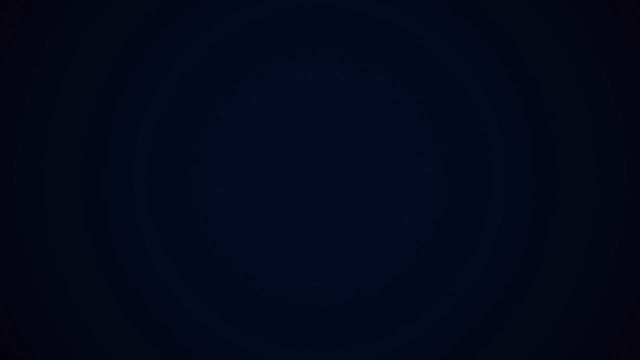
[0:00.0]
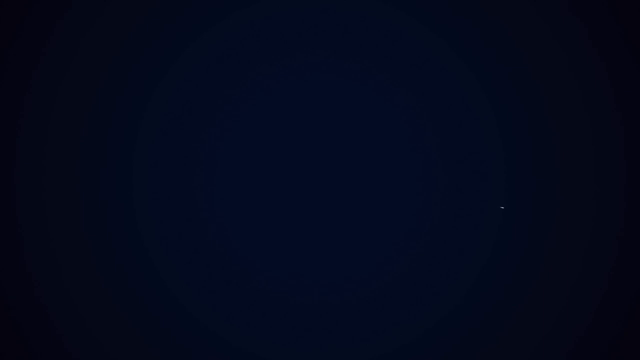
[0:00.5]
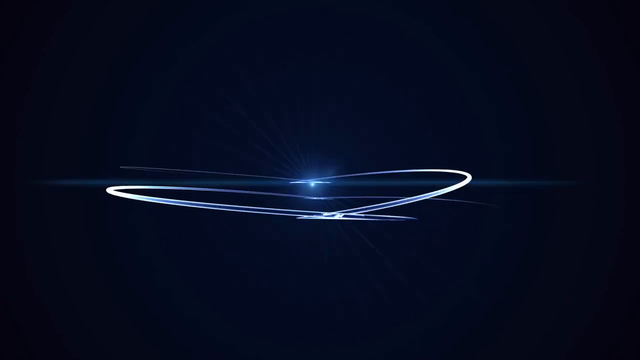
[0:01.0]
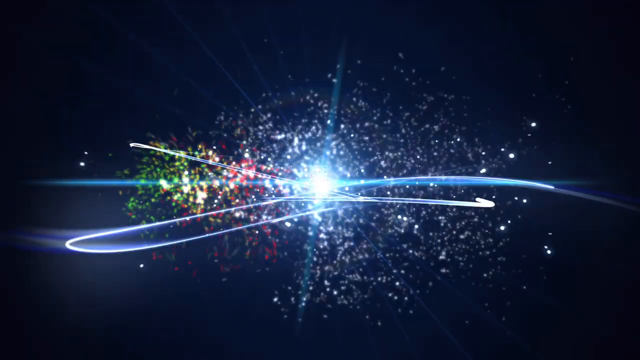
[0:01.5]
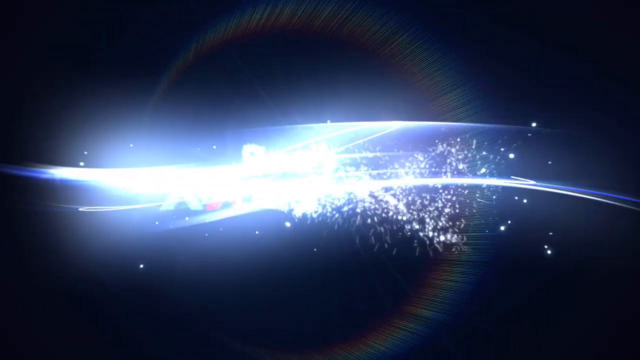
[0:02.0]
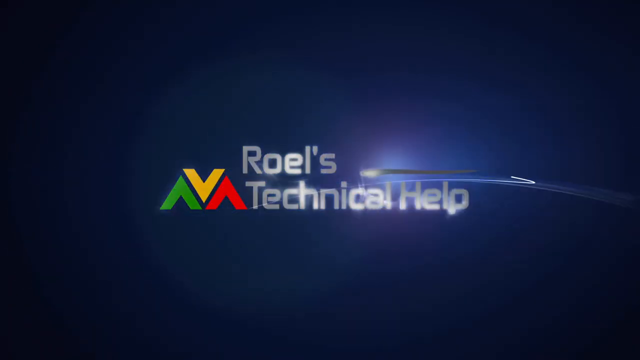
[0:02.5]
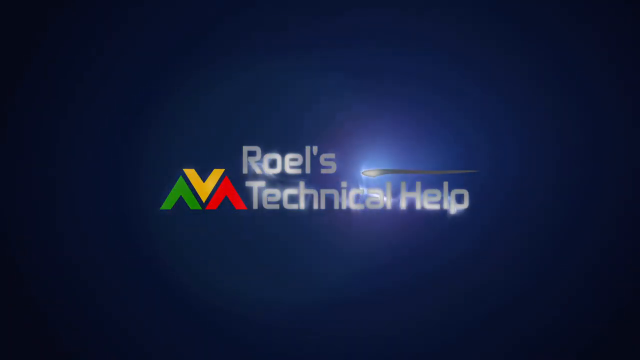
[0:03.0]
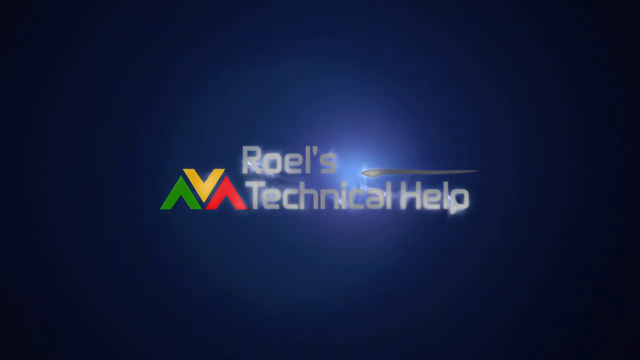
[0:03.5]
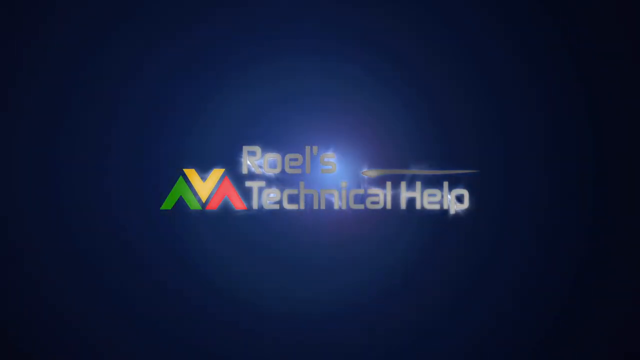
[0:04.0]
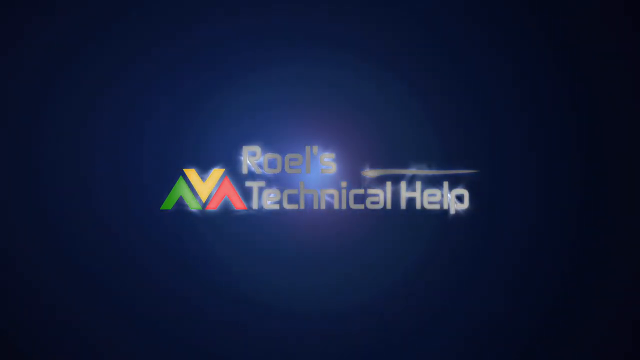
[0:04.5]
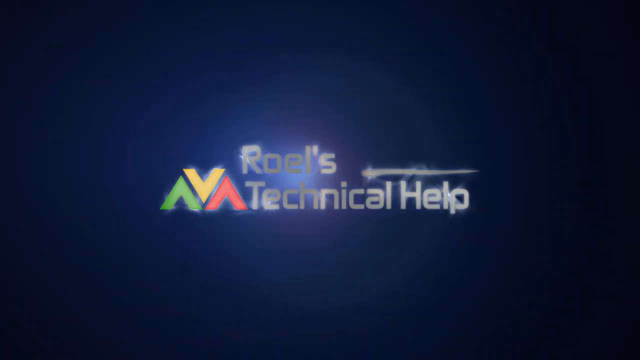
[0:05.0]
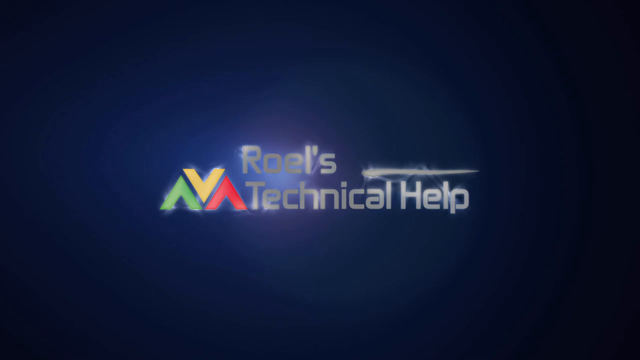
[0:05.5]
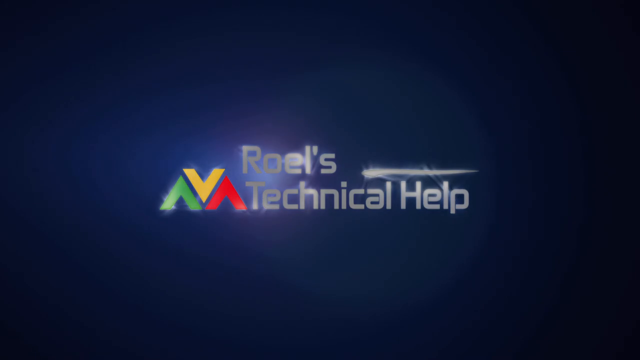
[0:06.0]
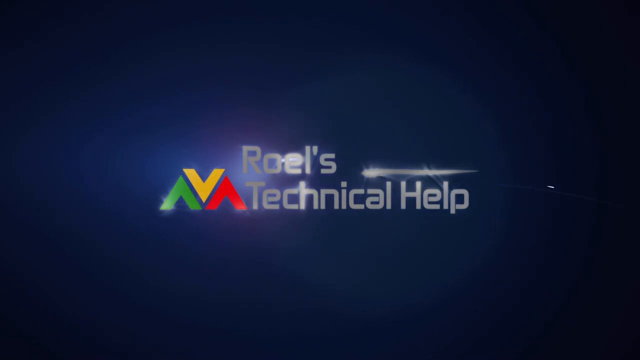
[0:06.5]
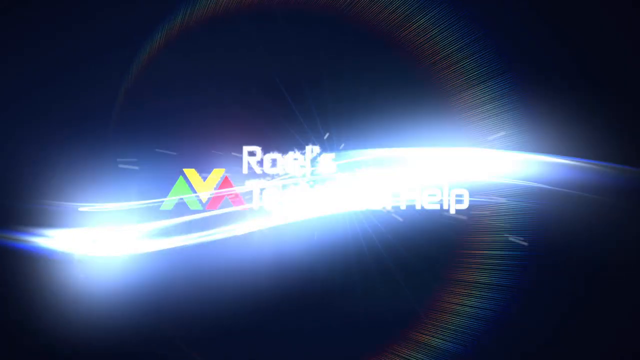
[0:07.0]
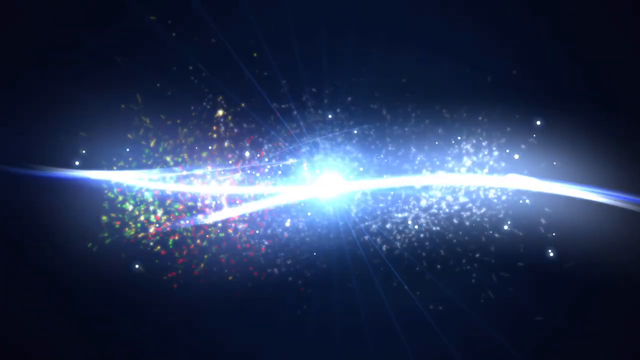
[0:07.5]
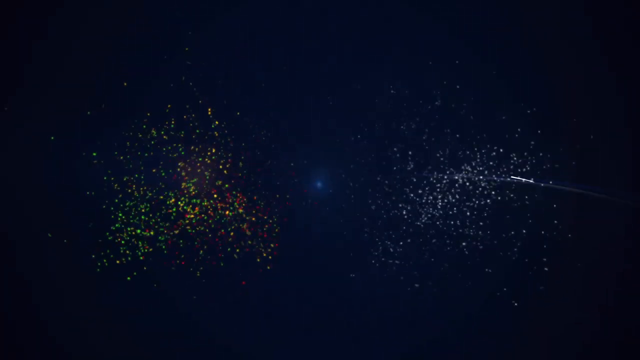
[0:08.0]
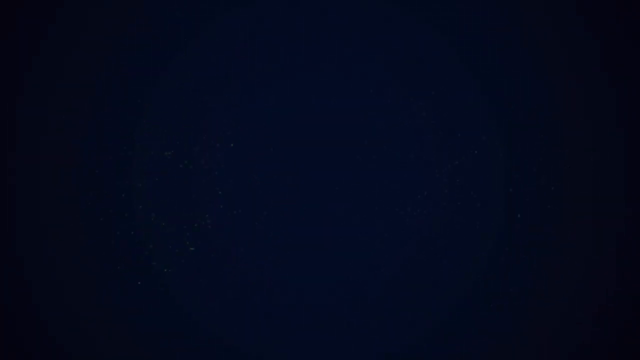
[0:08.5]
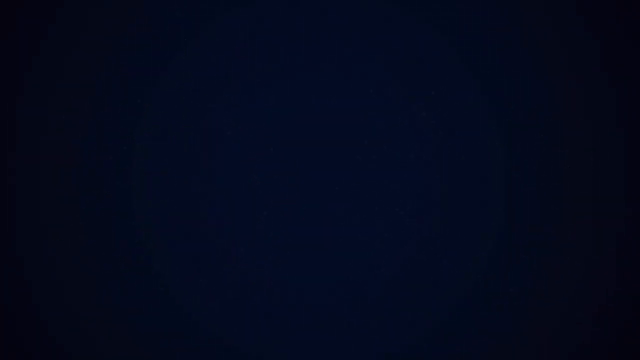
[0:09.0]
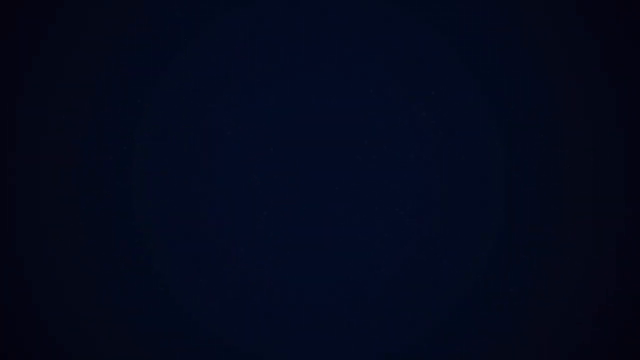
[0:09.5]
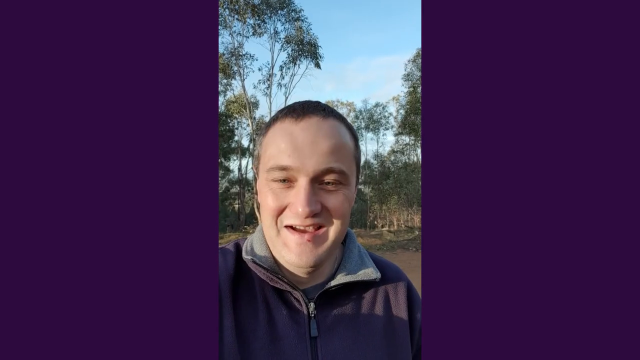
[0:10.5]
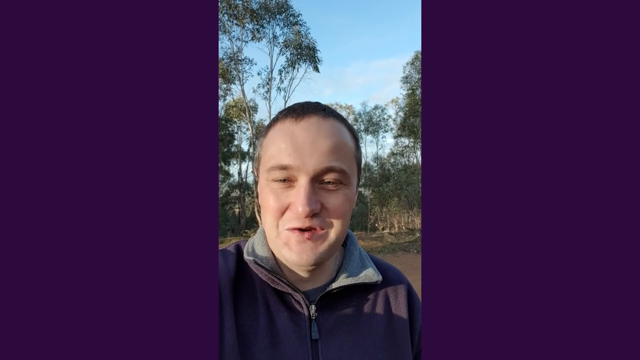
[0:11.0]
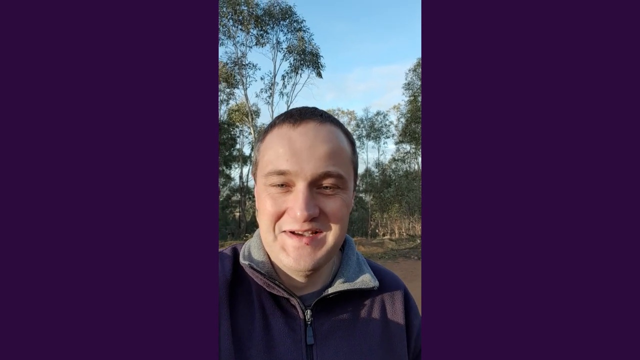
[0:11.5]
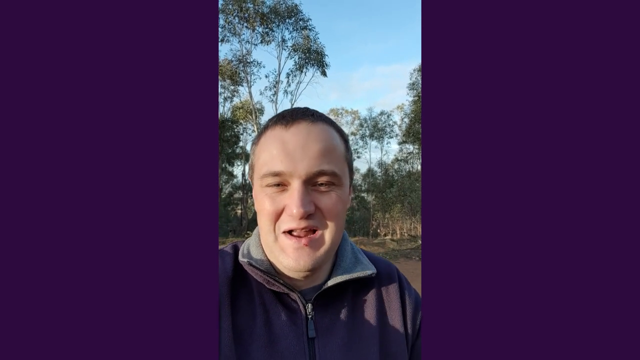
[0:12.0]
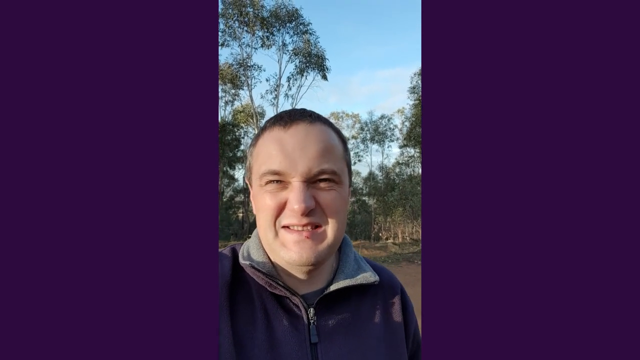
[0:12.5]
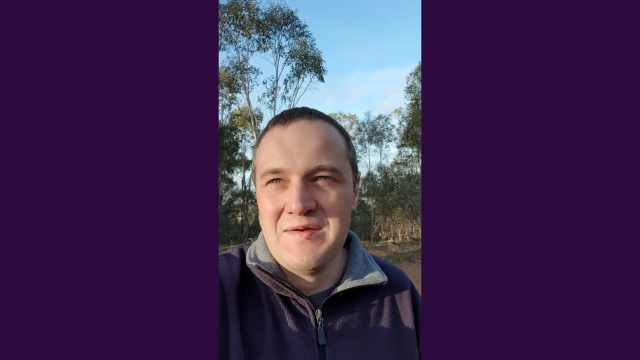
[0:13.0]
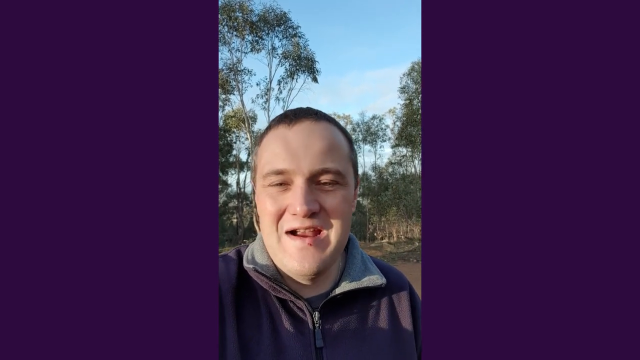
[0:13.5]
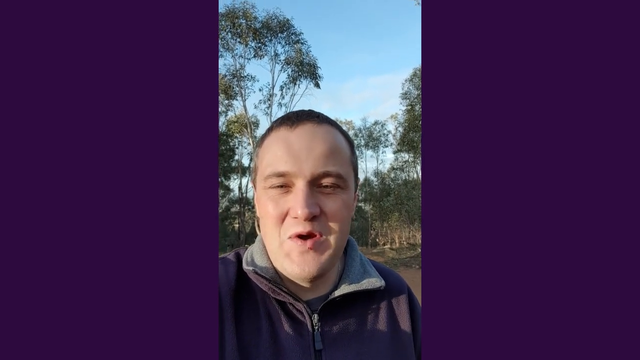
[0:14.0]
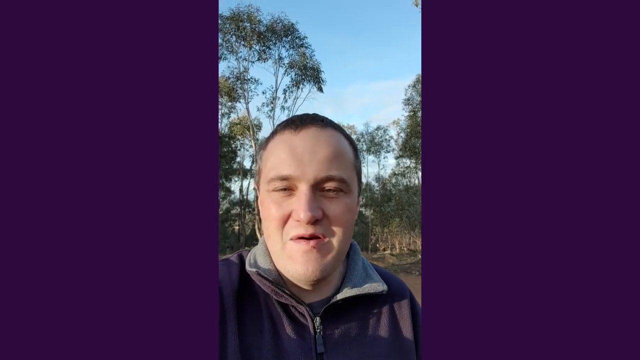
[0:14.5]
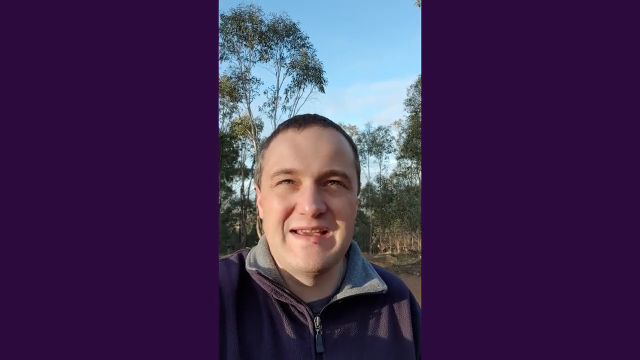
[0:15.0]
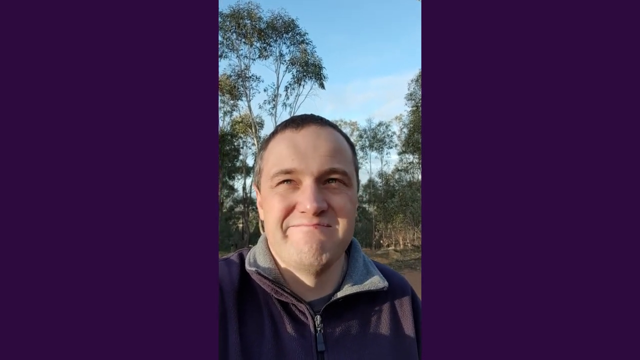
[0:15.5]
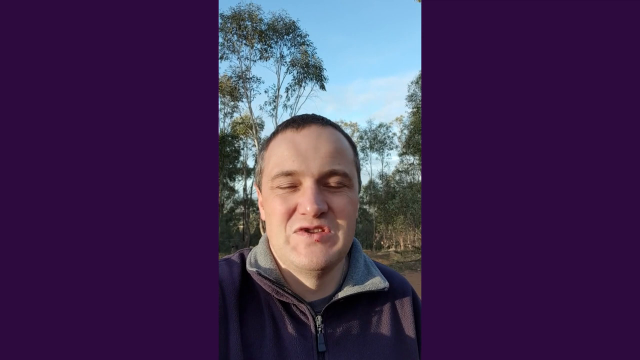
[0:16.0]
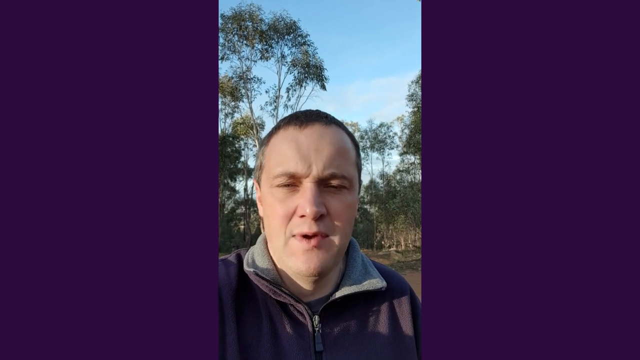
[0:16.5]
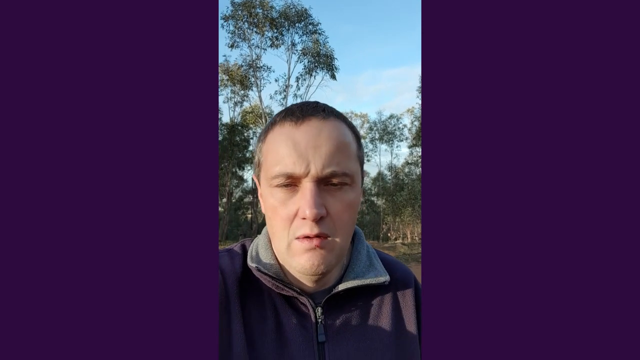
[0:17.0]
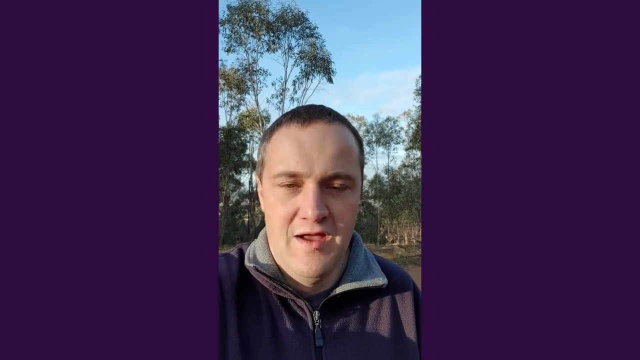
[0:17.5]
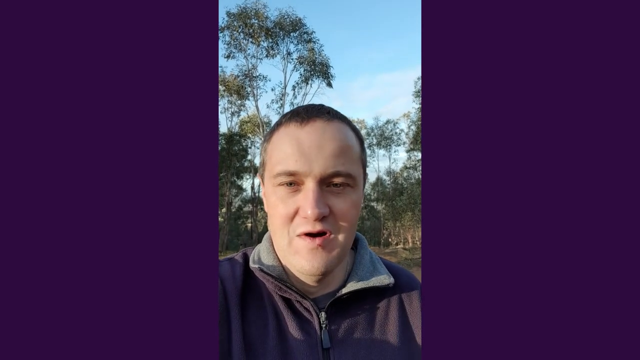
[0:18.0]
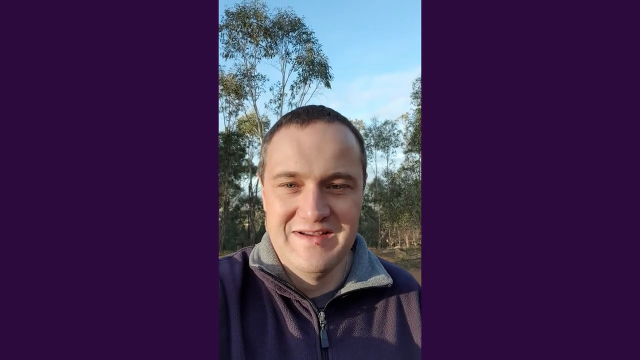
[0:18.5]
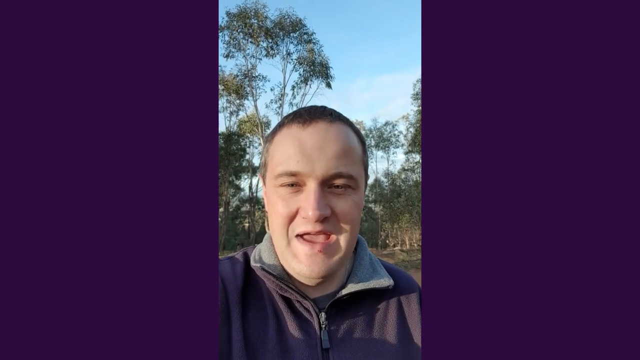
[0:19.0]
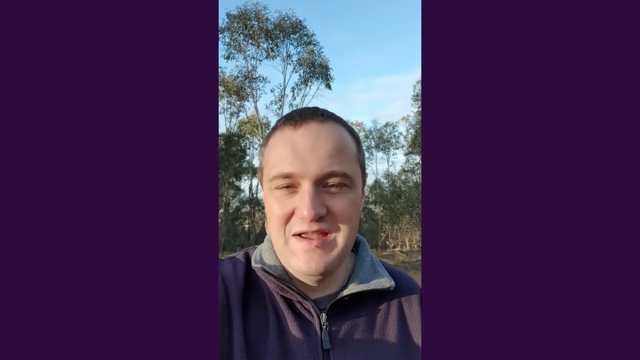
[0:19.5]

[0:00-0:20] The video opens with the company name "Roel's Technical Help" on a dark blue background. To the left of the name is a logo made of red, yellow and green V shapes: an upside-down green V in the middle, an upright yellow V, and an upside-down red V to the right. A man then appears, recording himself and talking; he looks happy. He is out in a forest or woods-type setting, with blue sky above and many tall, skinny green trees in the background. He looks at the camera, looks up, and then looks at the camera again. He wears a gray fleece and keeps talking while holding up a cell phone to record himself.